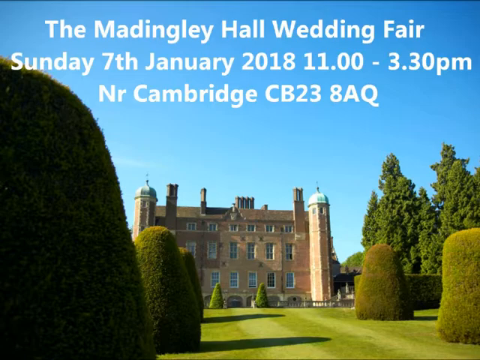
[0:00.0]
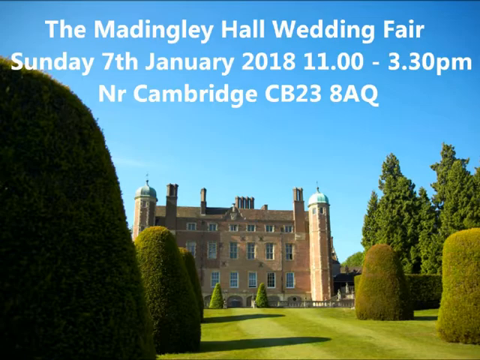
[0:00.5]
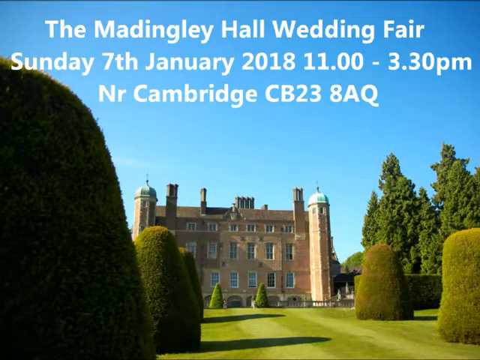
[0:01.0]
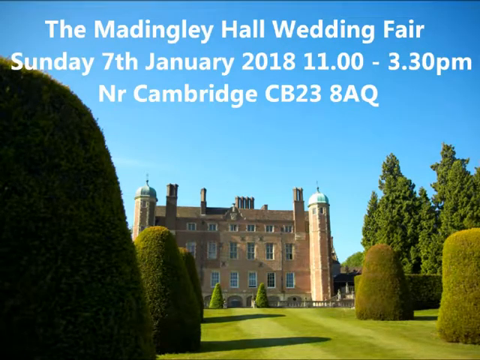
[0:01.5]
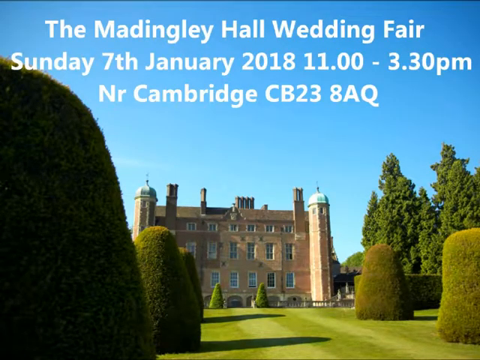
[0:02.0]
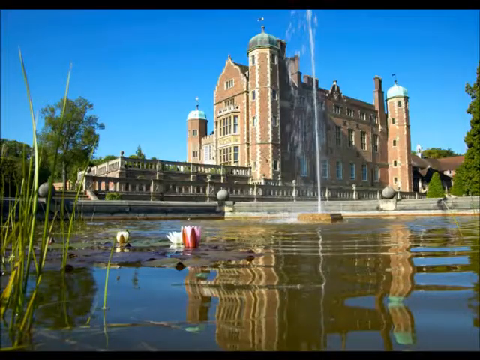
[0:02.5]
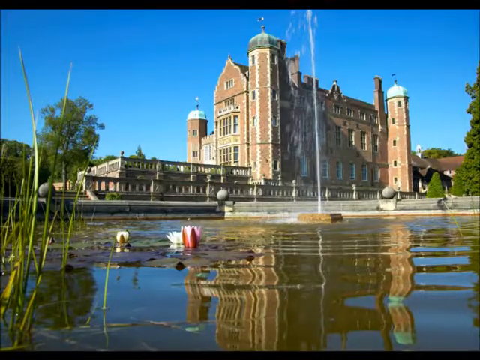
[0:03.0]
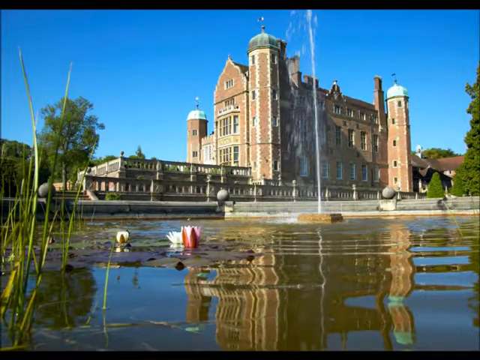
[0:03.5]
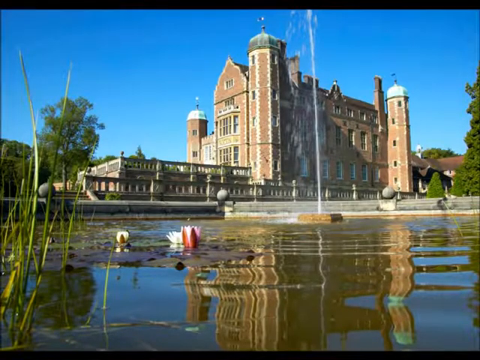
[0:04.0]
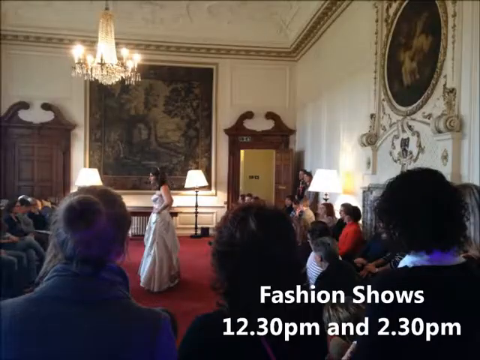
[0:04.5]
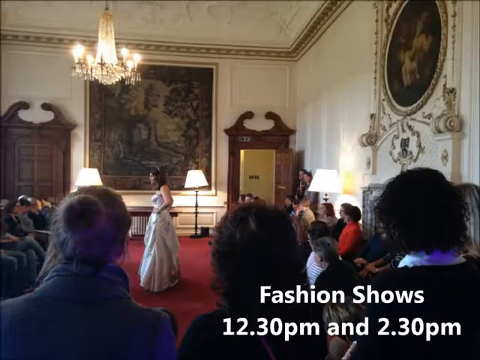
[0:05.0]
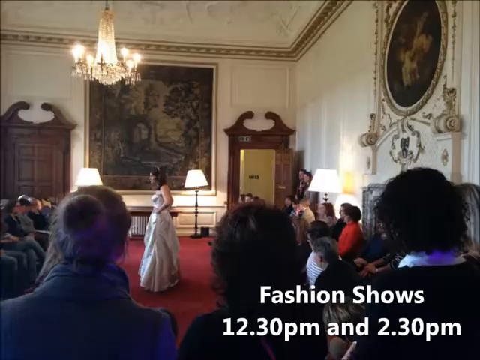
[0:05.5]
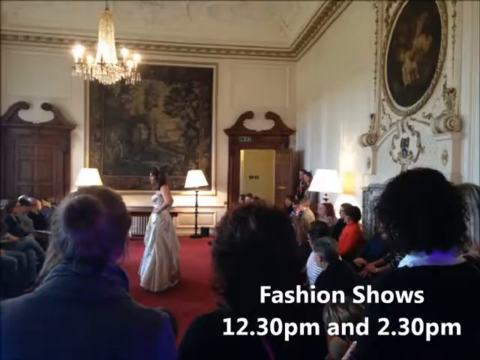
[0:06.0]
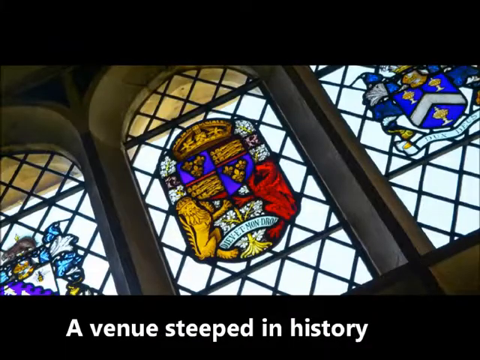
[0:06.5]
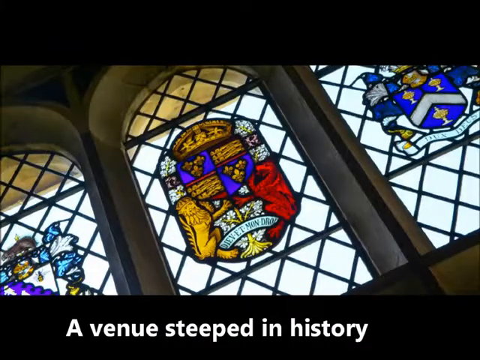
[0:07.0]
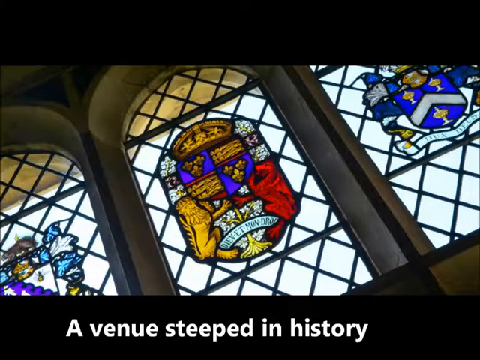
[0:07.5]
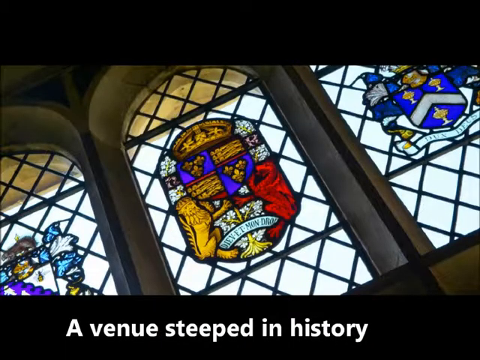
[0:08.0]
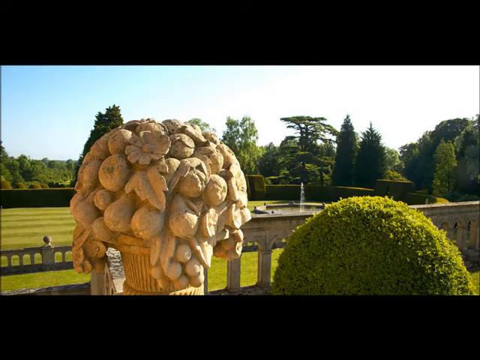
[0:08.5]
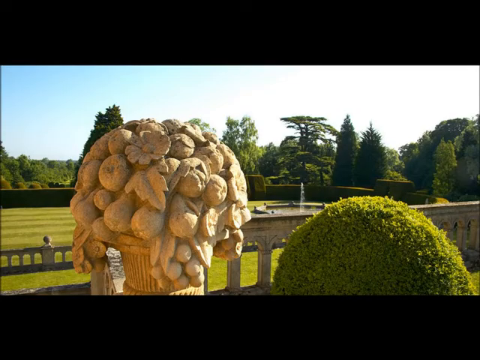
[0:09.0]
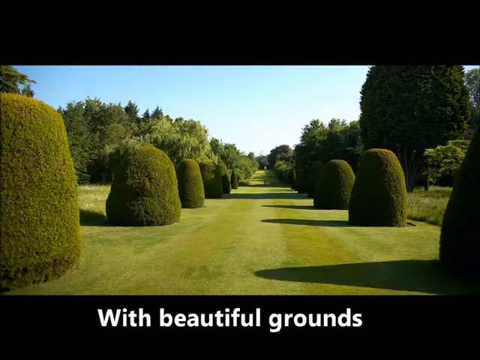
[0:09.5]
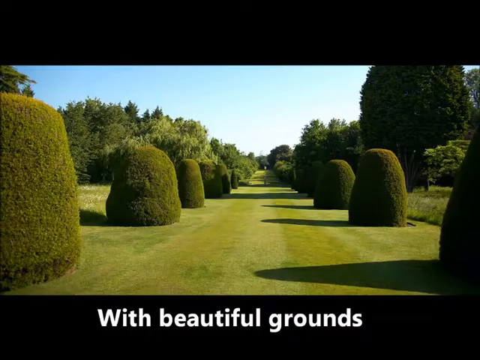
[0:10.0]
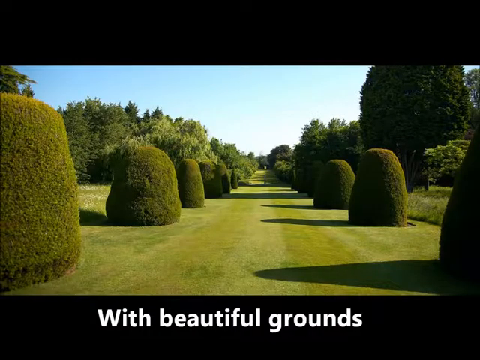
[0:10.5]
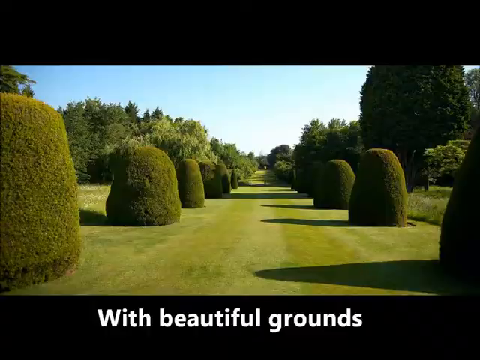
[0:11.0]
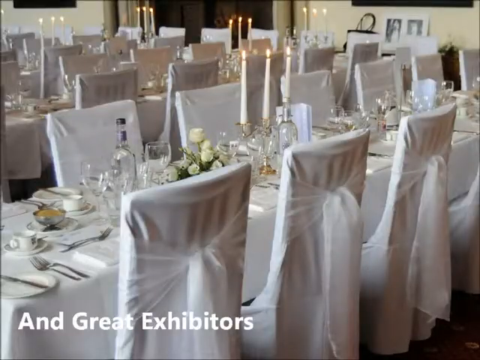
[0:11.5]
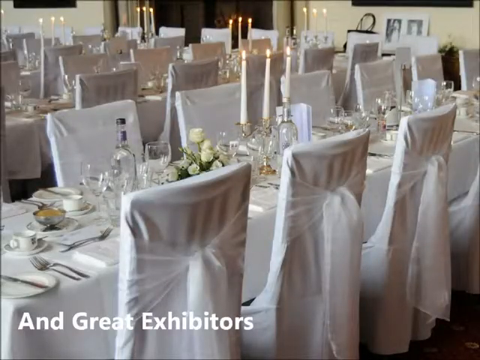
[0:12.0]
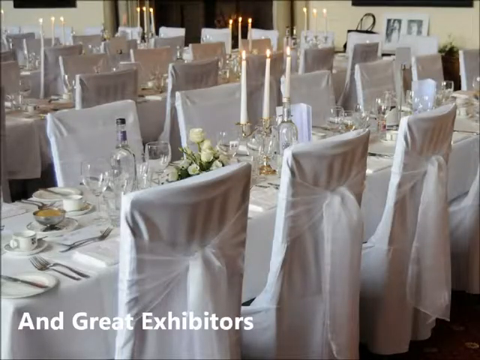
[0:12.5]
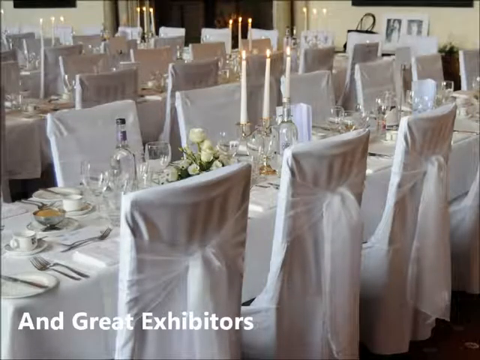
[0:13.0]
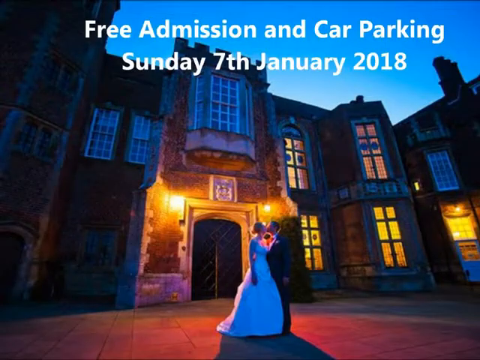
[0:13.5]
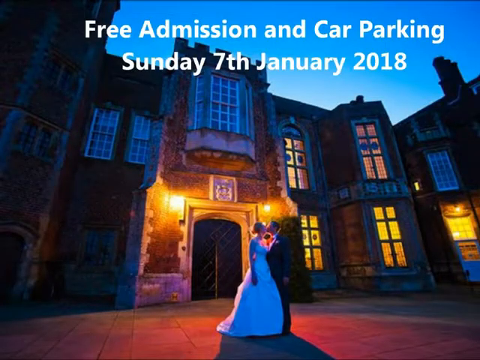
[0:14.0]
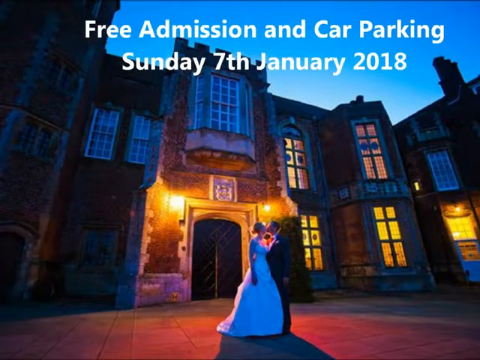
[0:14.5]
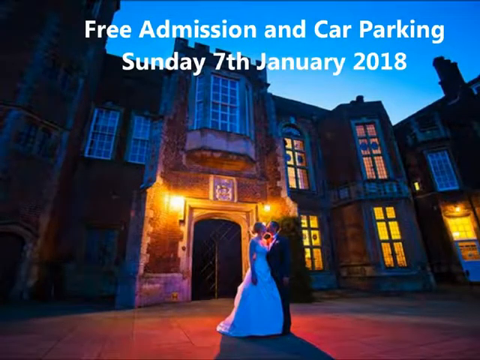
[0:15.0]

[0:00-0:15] The video opens outside a building, then moves inside, showing stained glass within the building and some of the gardens outside it. A dining room table is very nicely made up. The video is about a wedding fair, apparently from 2018 and seemingly in England, and has something to do with weddings and fashion shows; the venue is presented as steeped in history, with beautiful grounds. The dining table is set up in white, very obviously for a wedding, with white, gauzy veils over the chairs. An outdoor shot in the evening shows someone in a wedding dress, with some water like a pond visible. There is a red room, or a room with a red carpet. An outdoor shot shows a grassy area with trees and lines, and the building looks like a castle.